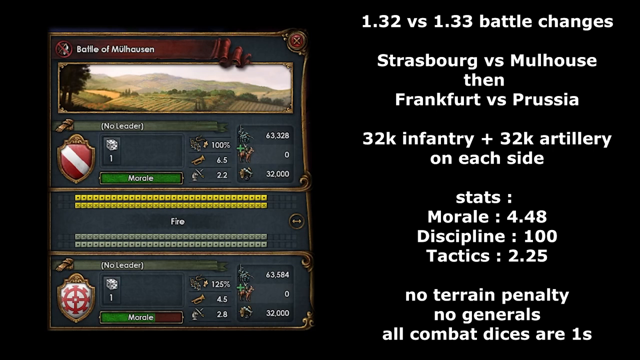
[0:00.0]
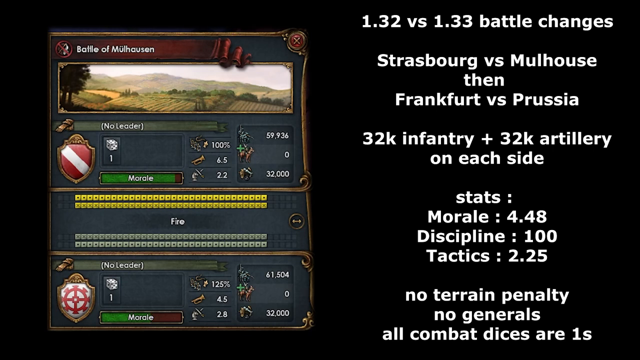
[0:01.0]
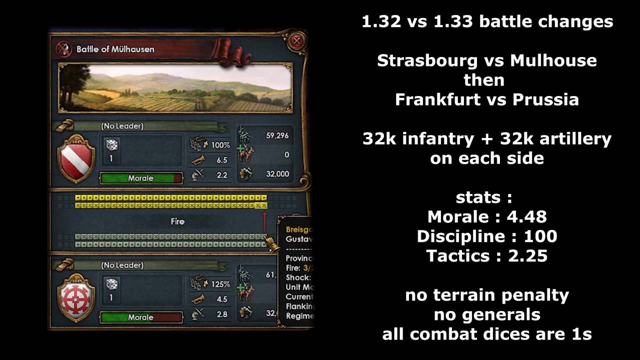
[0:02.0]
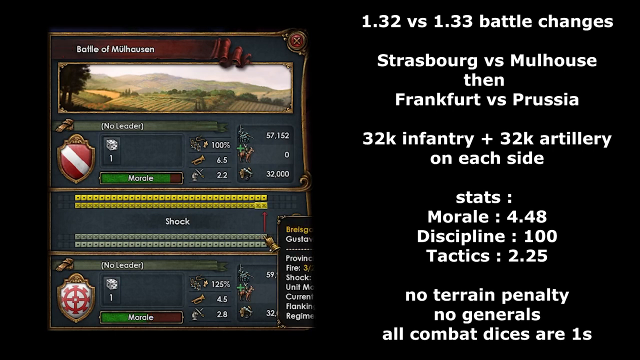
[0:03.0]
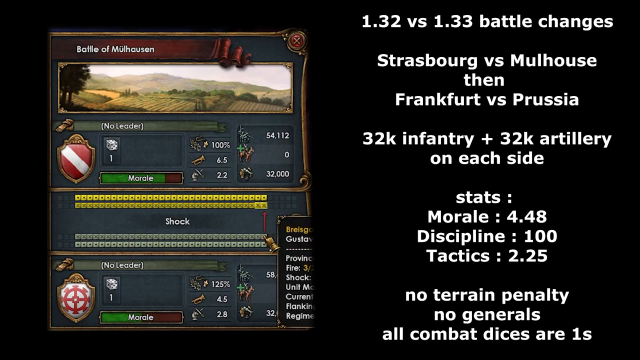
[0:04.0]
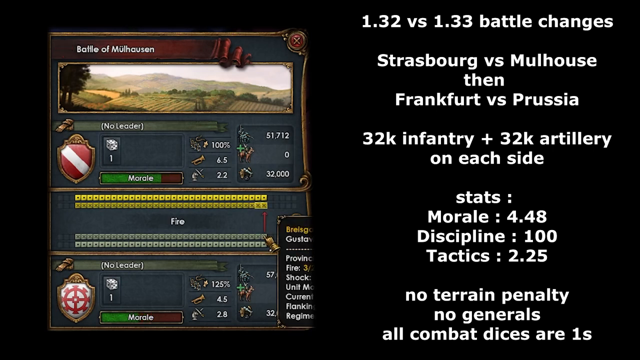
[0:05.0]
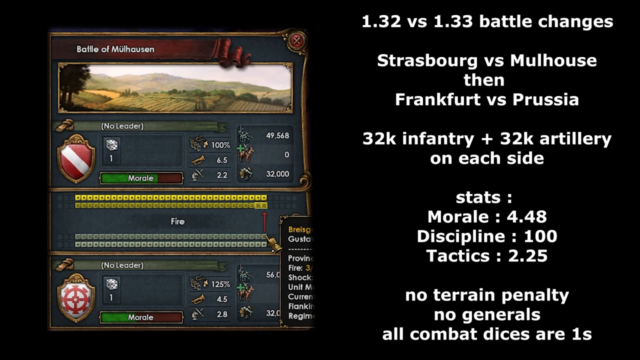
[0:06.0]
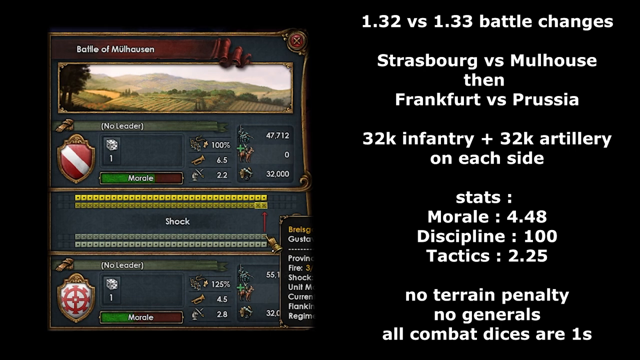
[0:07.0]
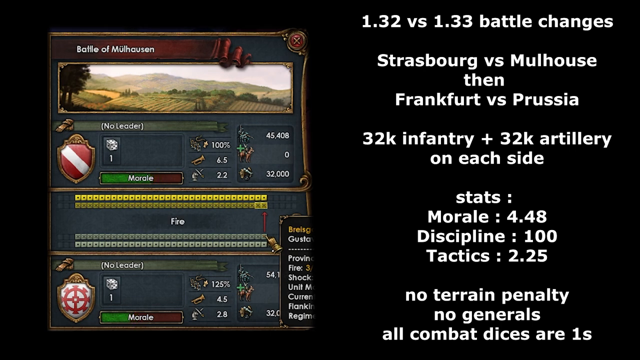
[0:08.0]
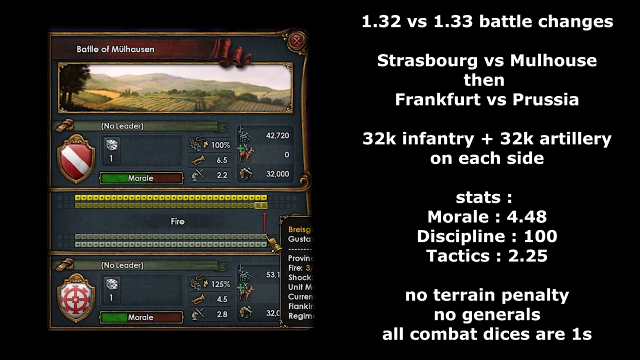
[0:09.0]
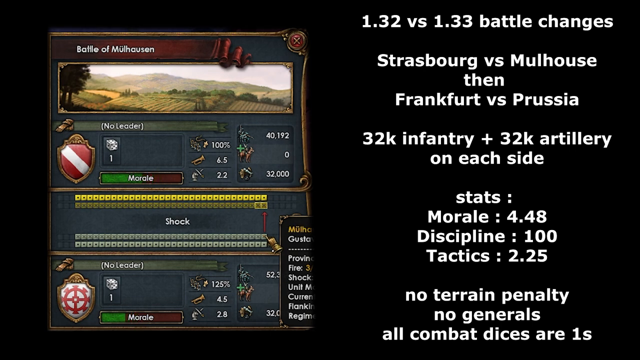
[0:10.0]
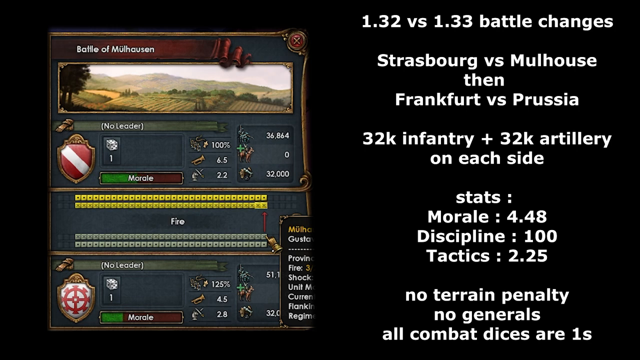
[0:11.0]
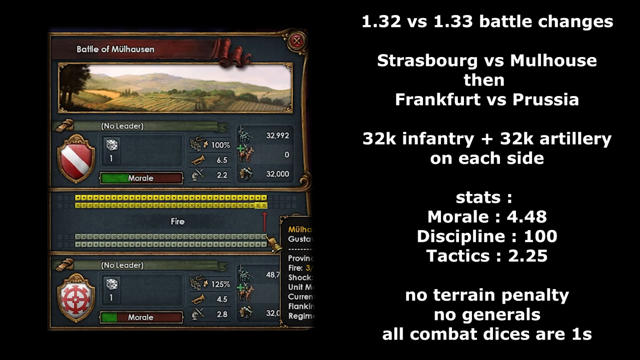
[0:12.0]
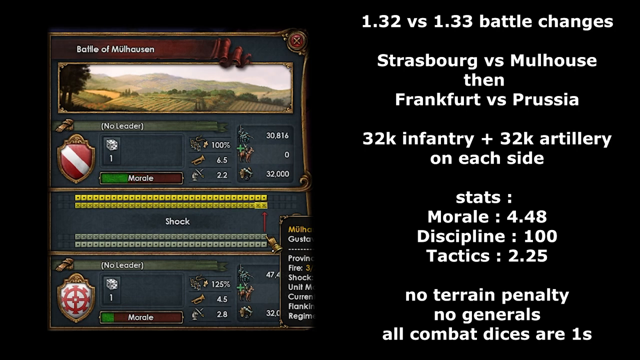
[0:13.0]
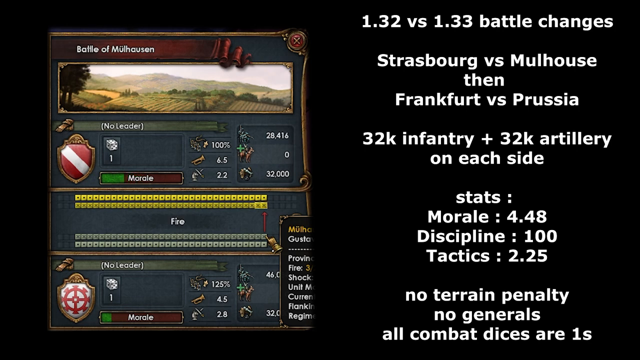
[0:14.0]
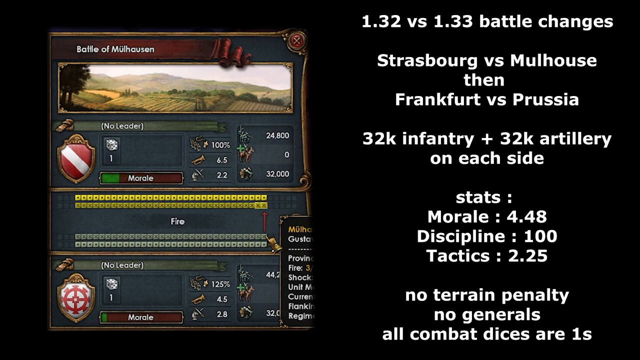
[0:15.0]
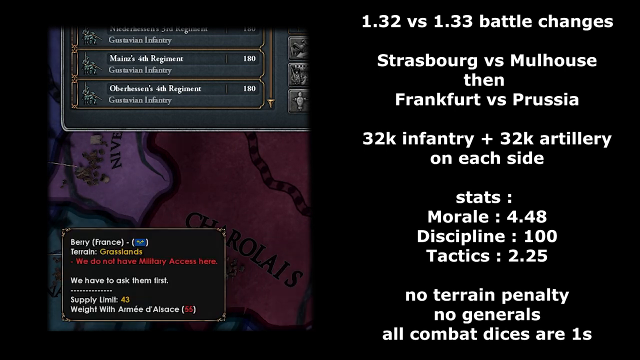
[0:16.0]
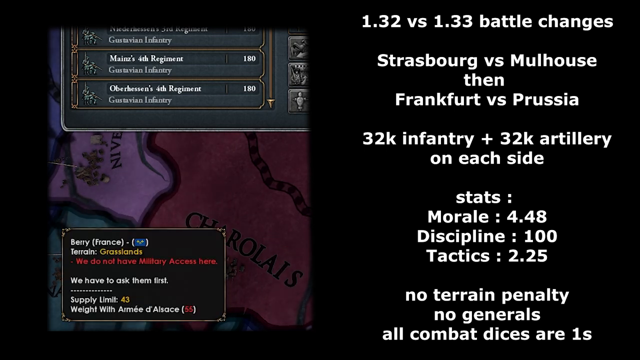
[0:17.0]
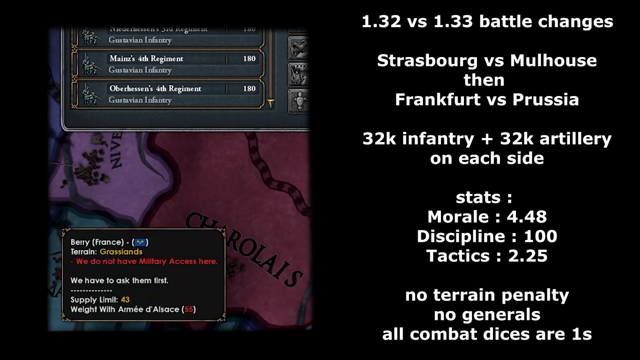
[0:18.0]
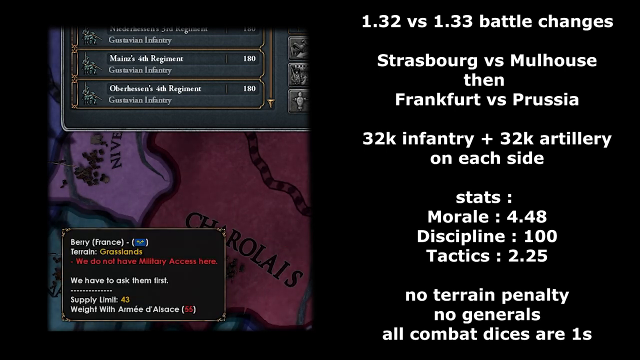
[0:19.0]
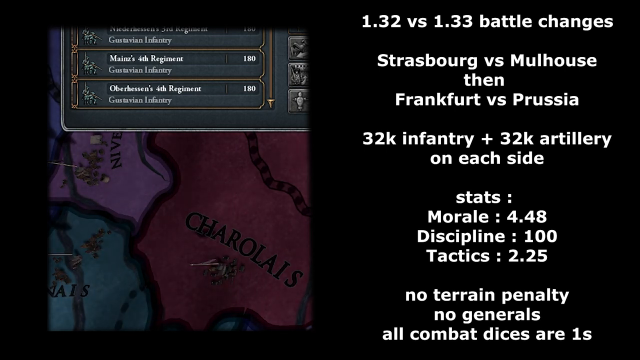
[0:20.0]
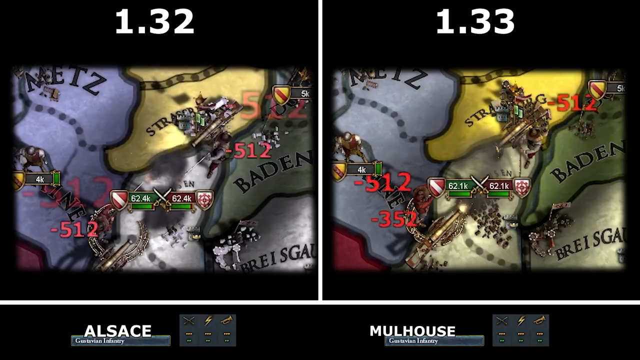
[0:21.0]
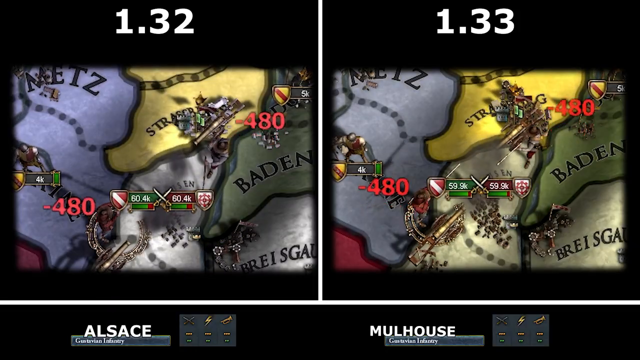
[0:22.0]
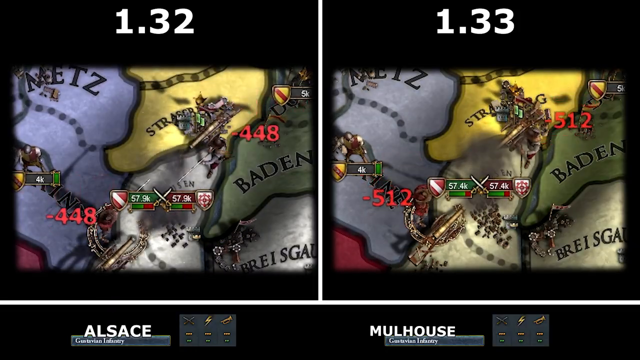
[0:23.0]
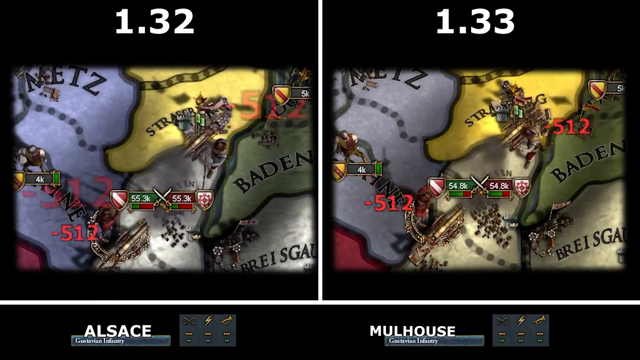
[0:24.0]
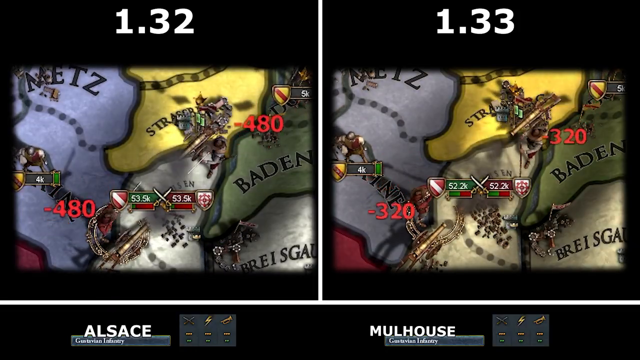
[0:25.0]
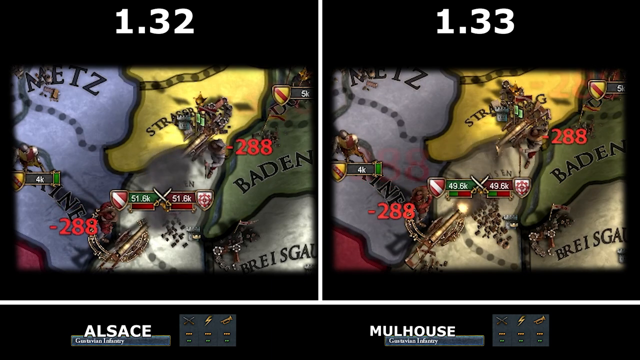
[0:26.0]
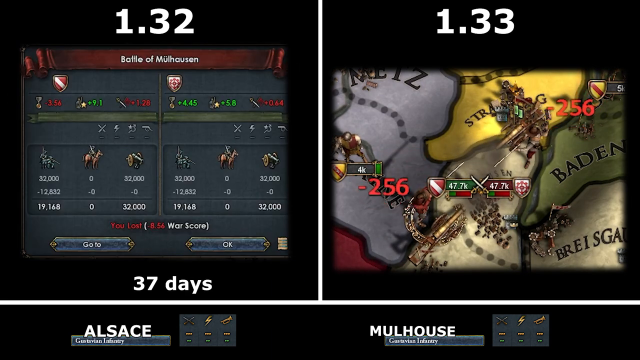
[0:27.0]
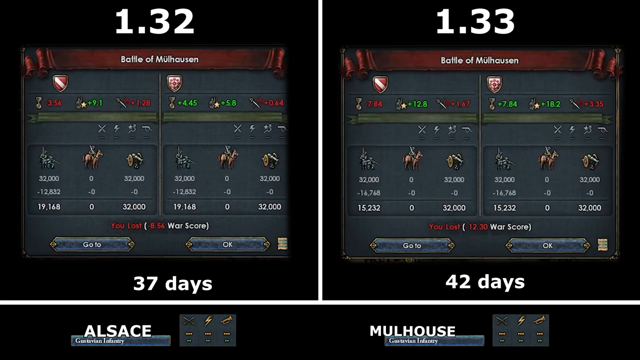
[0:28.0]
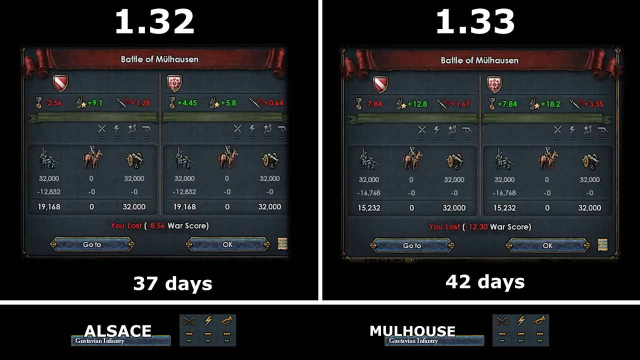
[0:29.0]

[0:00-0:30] The video opens on what looks like a menu from a video game. At the top left it reads "Battle of Mühlhausen" above a picture of a kind of pastoral farmland. On the right side, white text reads "1.32 vs. 1.33 battle changes, Strasburg vs. Mühlhausen, then Frankfurt vs. Prussia, 32k infantry plus 32k artillery on each side, stats, morale 4.48, discipline 100, tactics 2.25, no terrain penalty, no generals, all combat dices are 1s." Text in the very center of the screen flashes through different words, such as "shack," "fire" and "shack fire," apparently repeated several times. The left side of the screen then changes to a map with a menu bar across the very top, and a text box pops up at the bottom that includes "terrain grasslands." The screen switches to a split screen of two of these maps, the left one labeled "1.32" at the top and the right one "1.33." Negative numbers in red pop out from the maps, and vehicles and explosions move around. The left screen turns back to the Battle of Mühlhausen menu screen with "37 days" underneath, and then the right screen changes, showing "42 days" underneath.